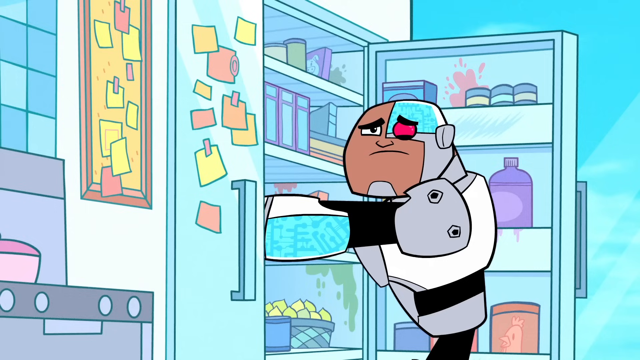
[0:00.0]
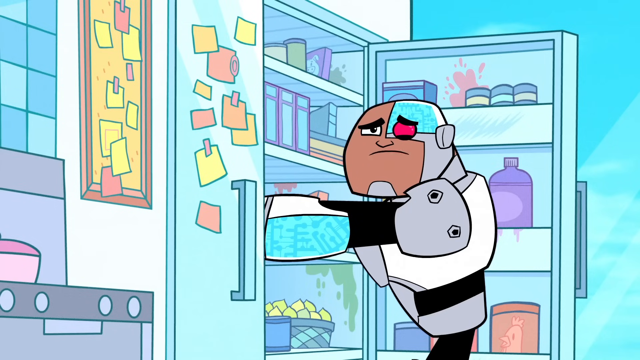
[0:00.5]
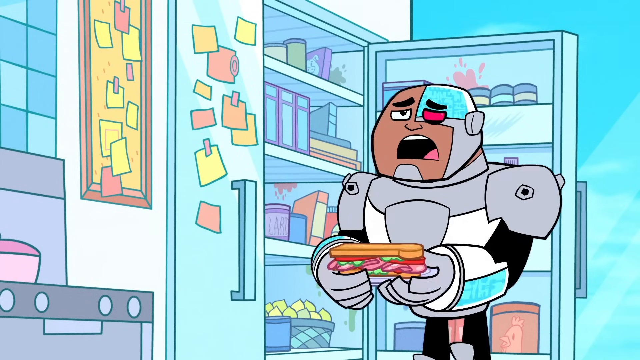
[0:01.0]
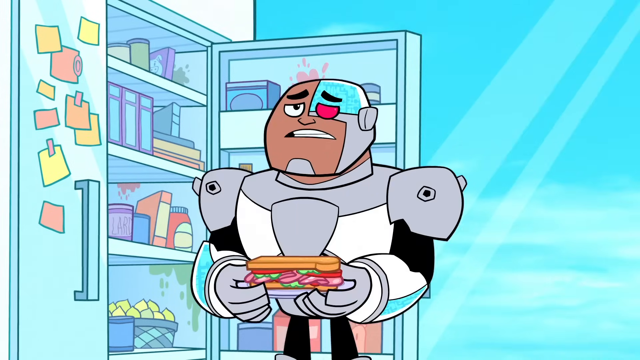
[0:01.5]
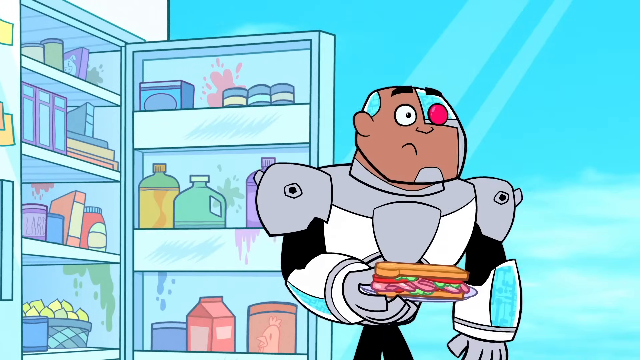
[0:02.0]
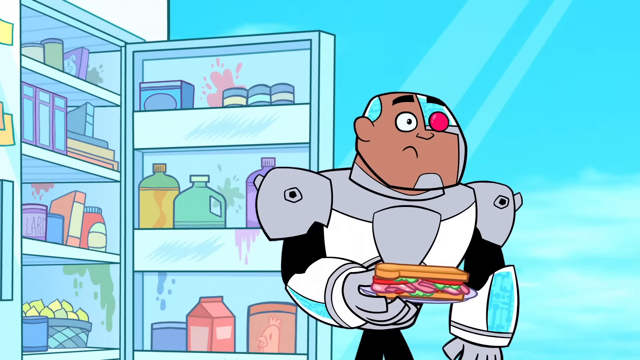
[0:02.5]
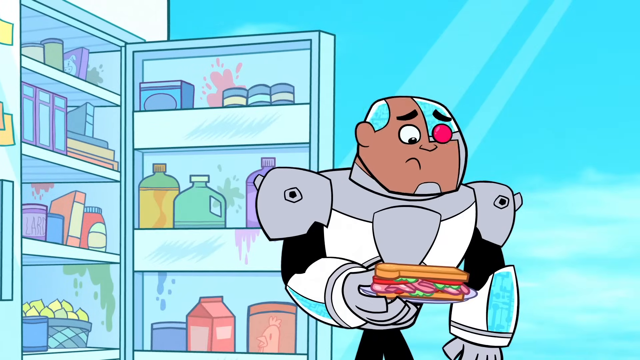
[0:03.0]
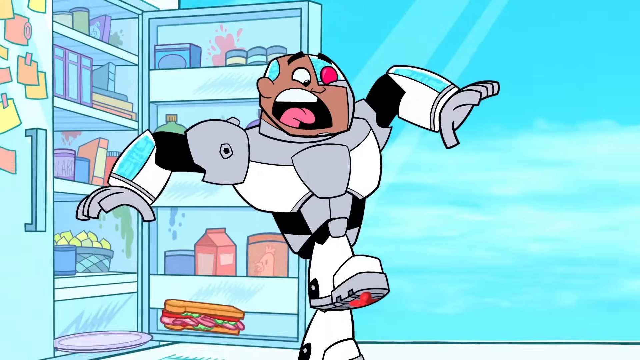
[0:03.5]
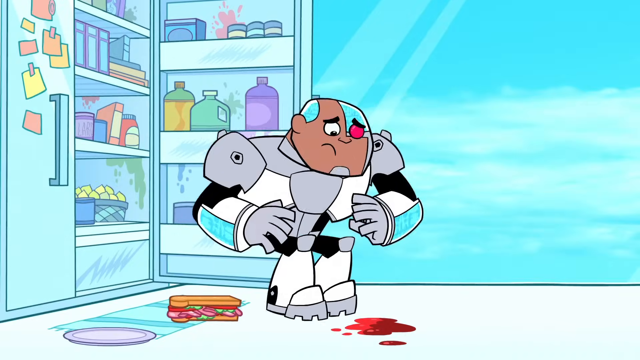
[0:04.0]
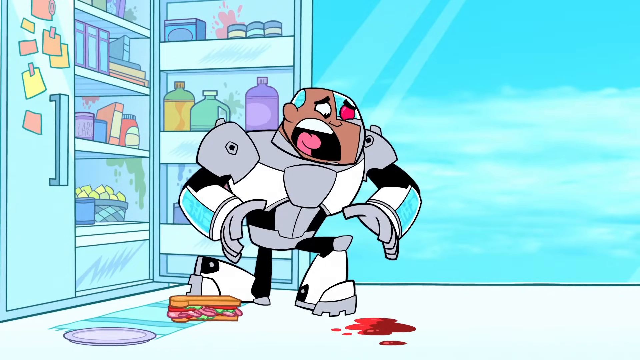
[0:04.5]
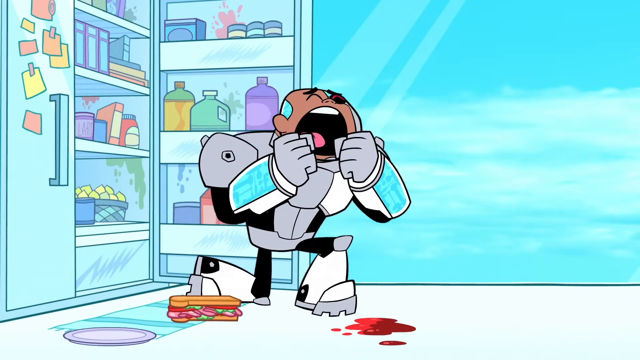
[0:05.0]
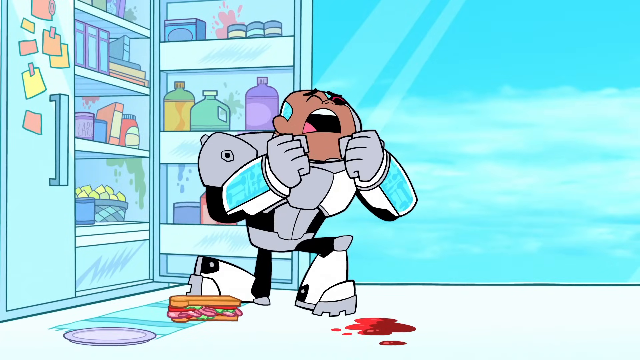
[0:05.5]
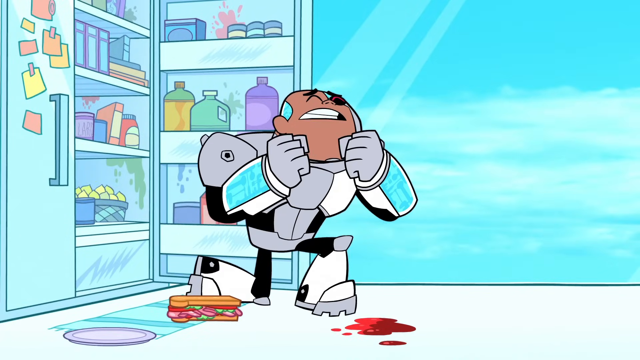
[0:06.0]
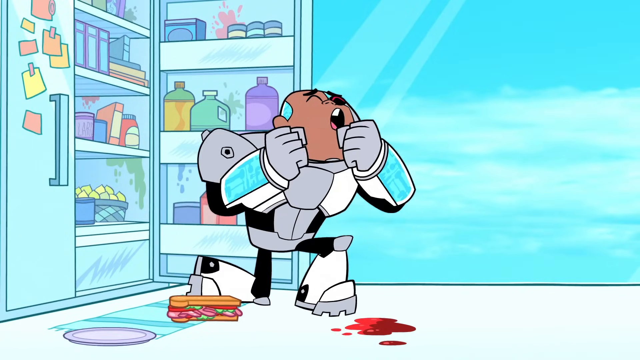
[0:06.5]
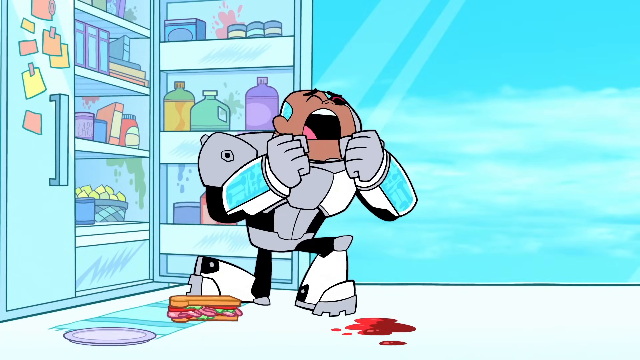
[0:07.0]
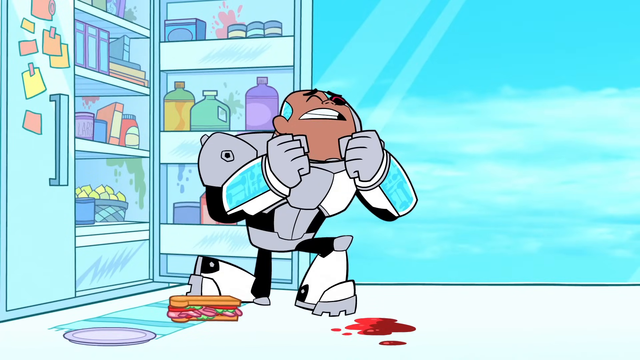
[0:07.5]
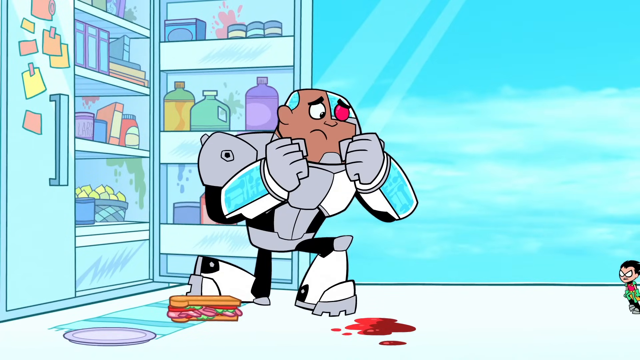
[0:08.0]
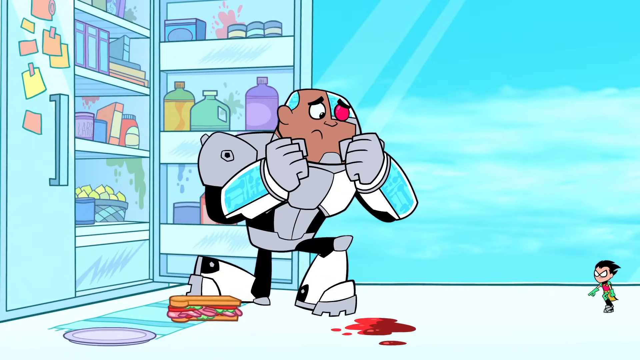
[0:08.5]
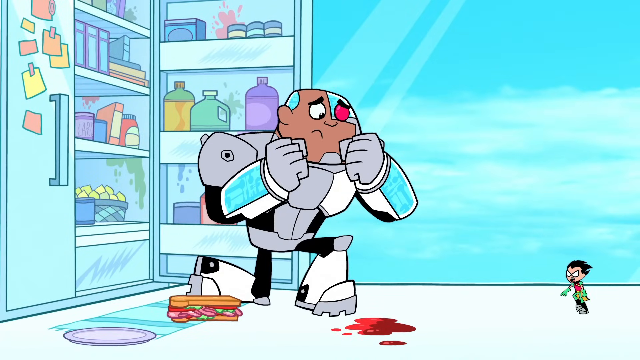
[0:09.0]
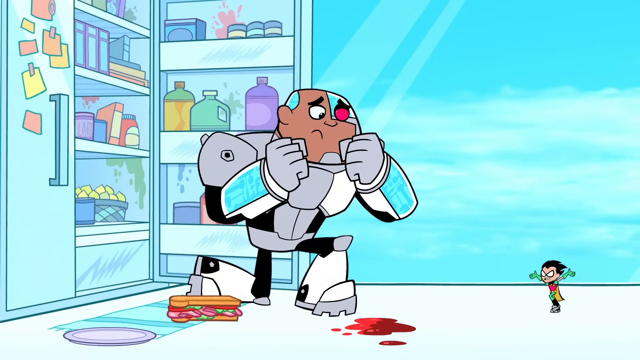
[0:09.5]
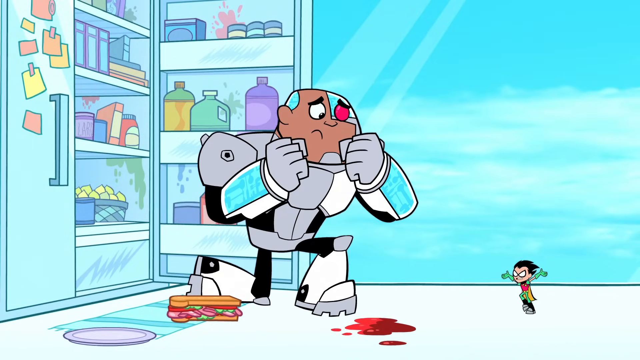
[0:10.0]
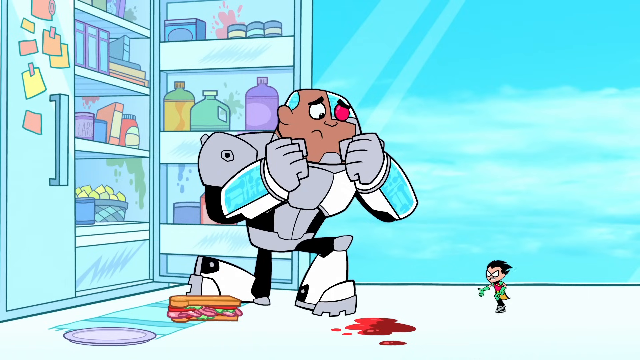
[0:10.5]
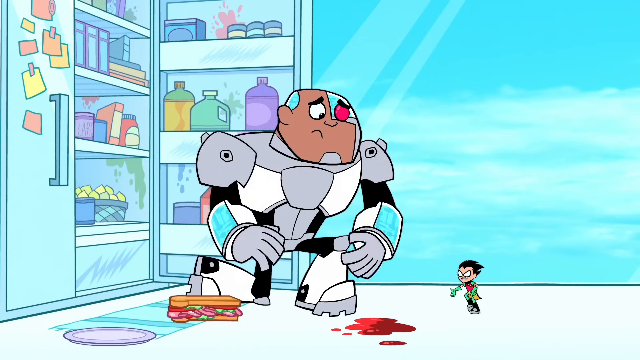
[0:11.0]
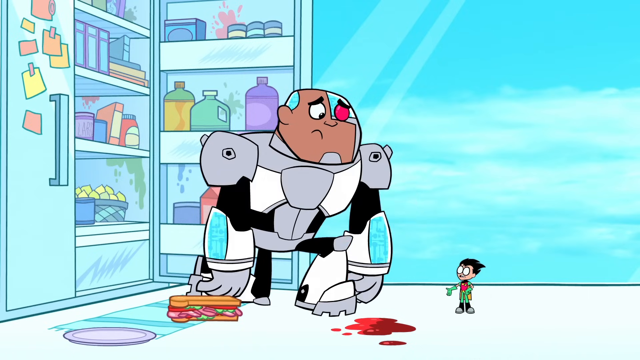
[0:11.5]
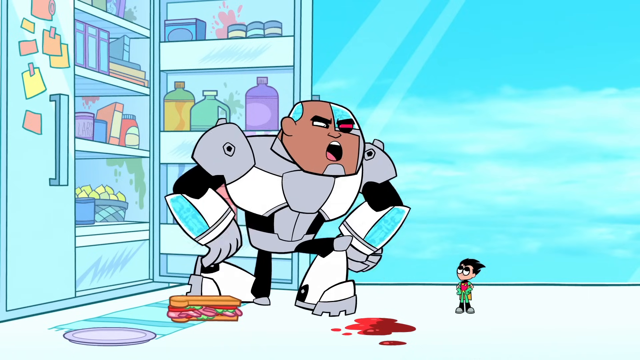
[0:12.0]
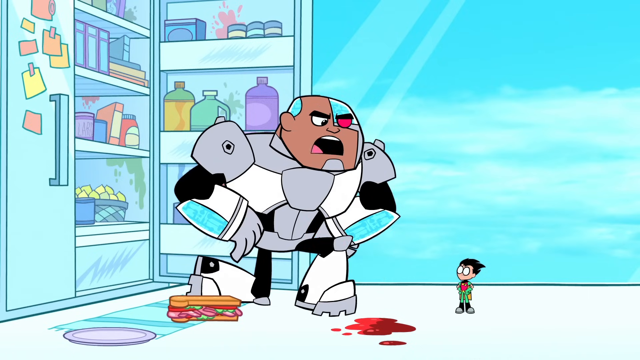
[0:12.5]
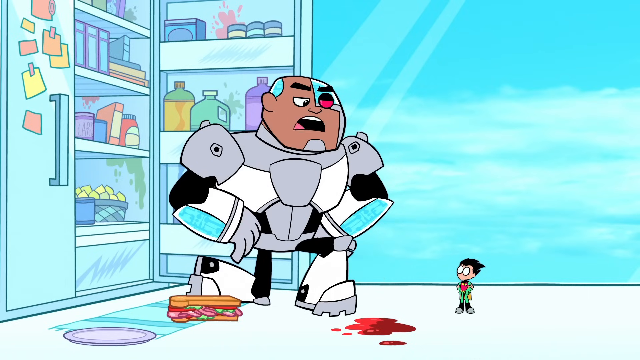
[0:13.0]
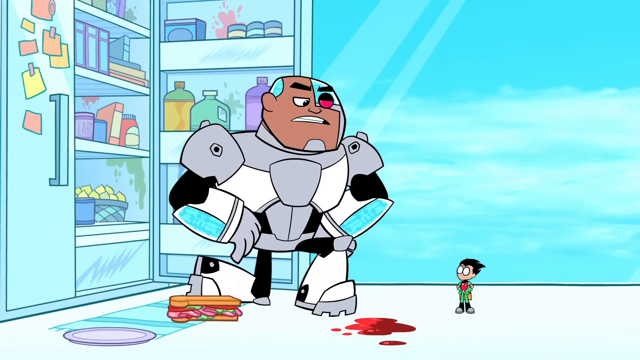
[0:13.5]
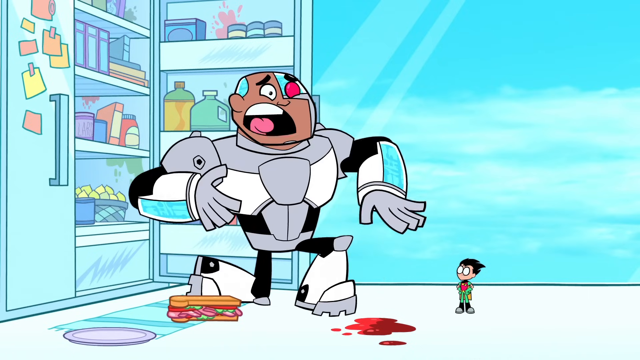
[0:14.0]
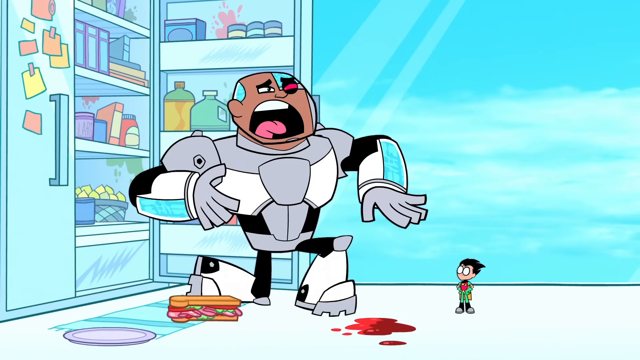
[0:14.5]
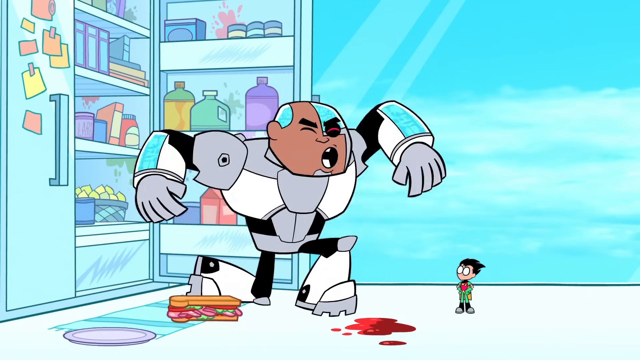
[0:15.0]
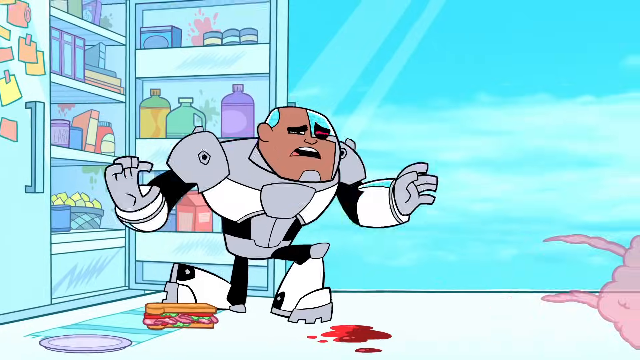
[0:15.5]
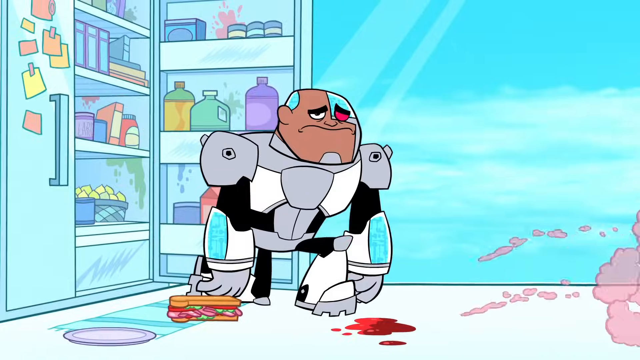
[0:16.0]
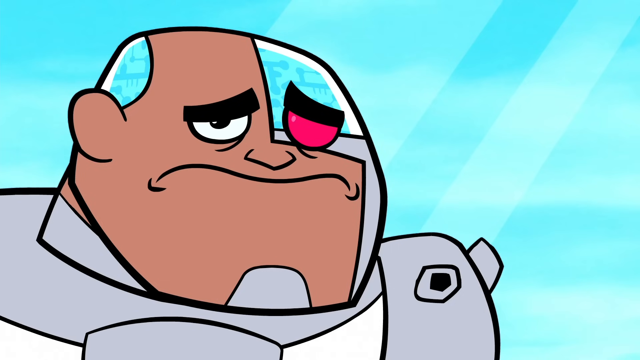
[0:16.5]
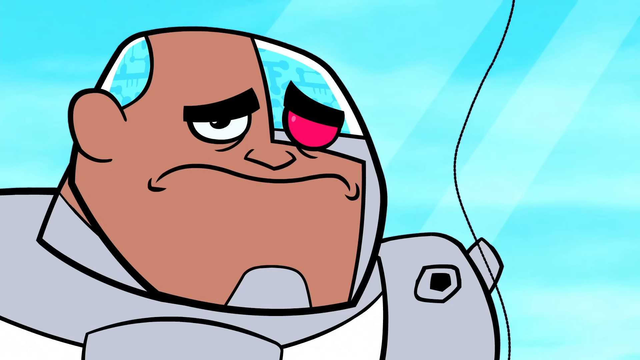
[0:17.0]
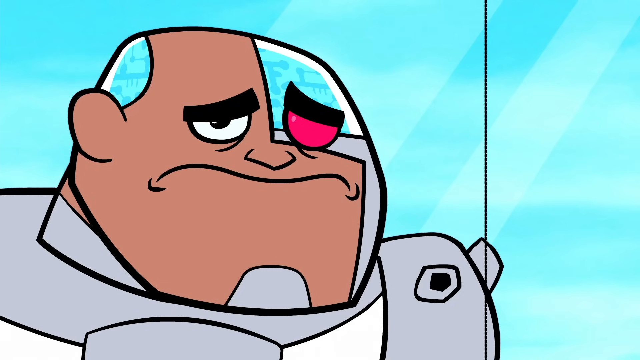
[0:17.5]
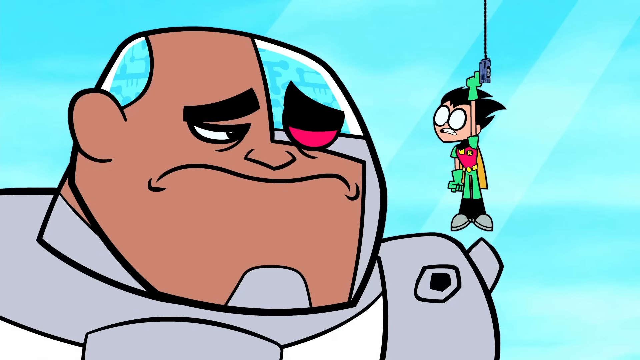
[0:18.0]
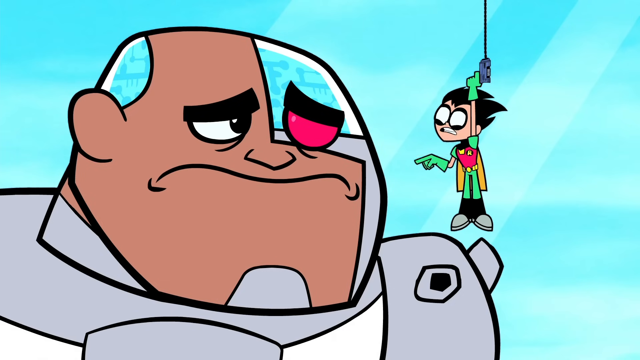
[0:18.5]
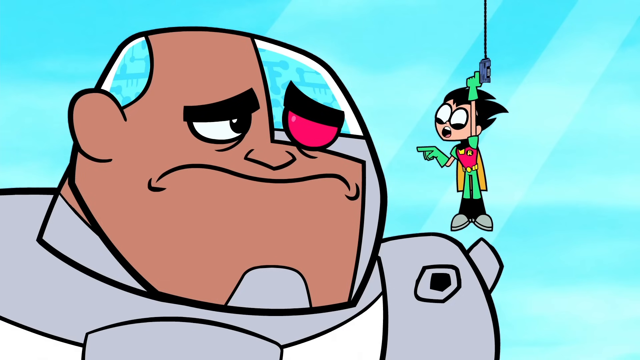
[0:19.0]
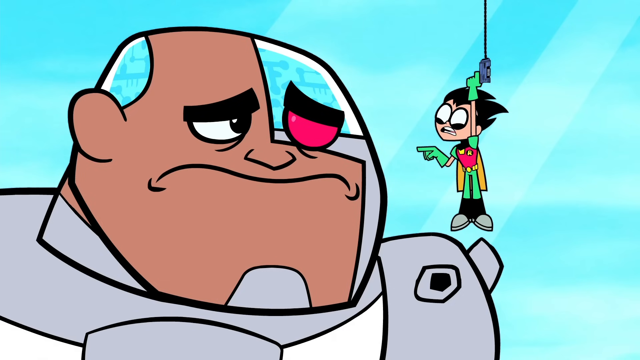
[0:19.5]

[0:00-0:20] A scene from the cartoon series Teen Titans Go, featuring the superhero team the Teen Titans, opens with the hero Cyborg, who is part man, part machine, looking through a refrigerator with post-it notes all over one side of it. Half of his face is covered with kind of a metal skeleton, and he has a red eye. He is speaking and pulls out a sandwich. He then appears to drop the sandwich on the ground and fall to his knees while the superhero Robin, who is very tiny, walks up next to him. Cyborg seems to sneeze, and Robin gets thrown away. Robin then uses a grappling gun to pull himself up so he is face to face with the much larger Cyborg, and he speaks to him.